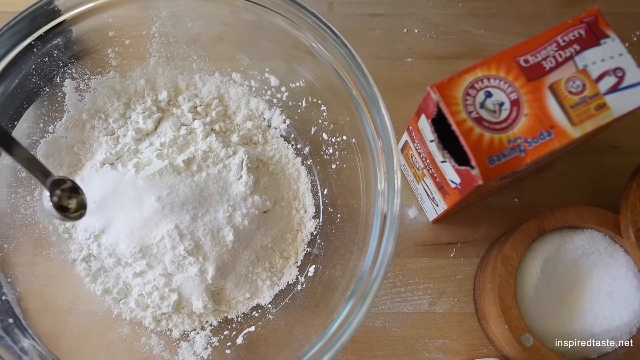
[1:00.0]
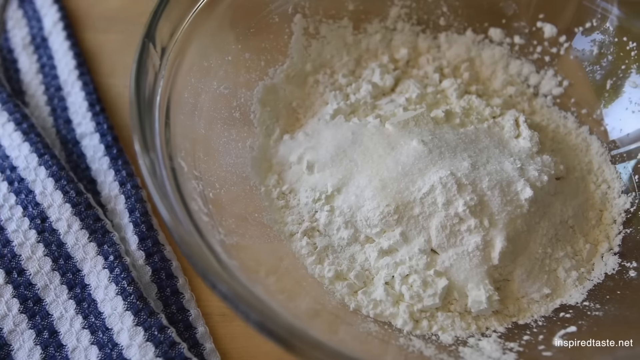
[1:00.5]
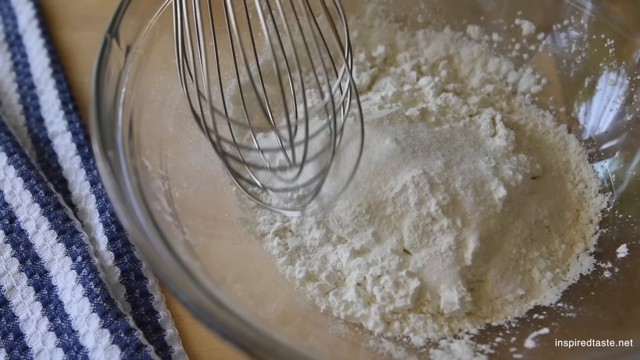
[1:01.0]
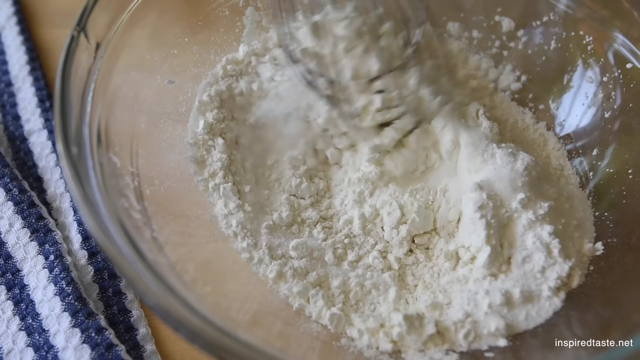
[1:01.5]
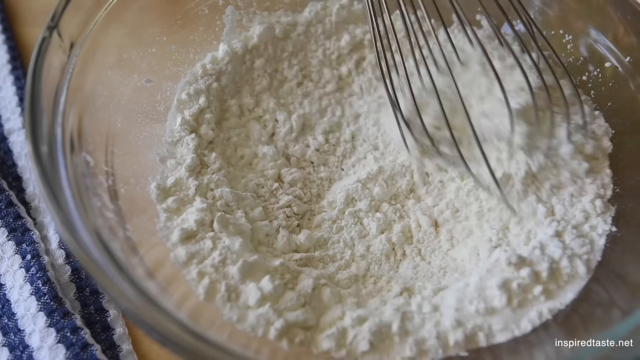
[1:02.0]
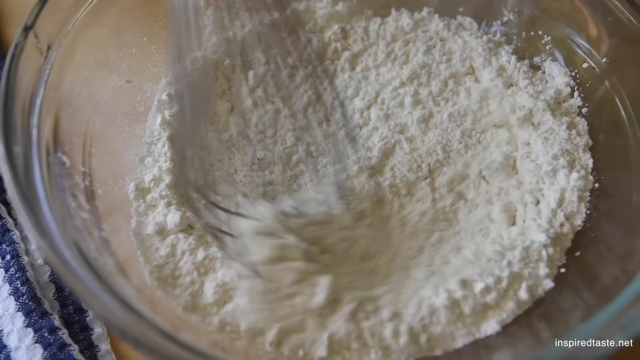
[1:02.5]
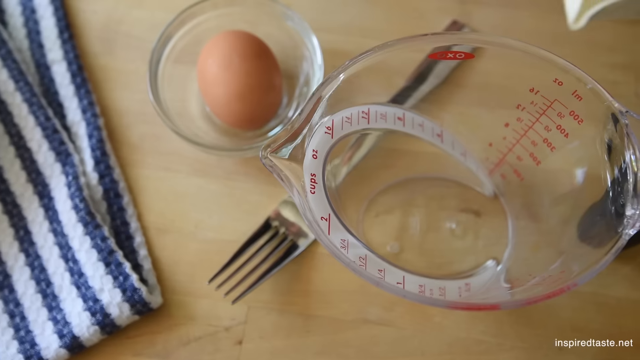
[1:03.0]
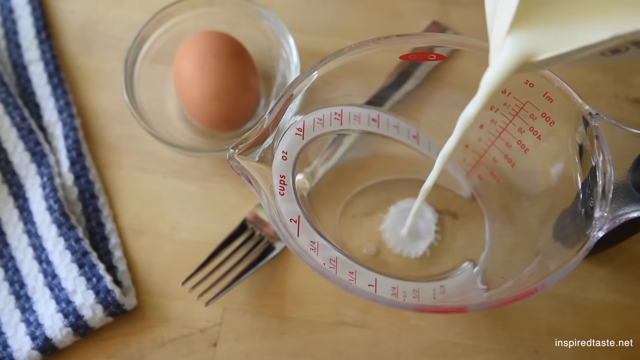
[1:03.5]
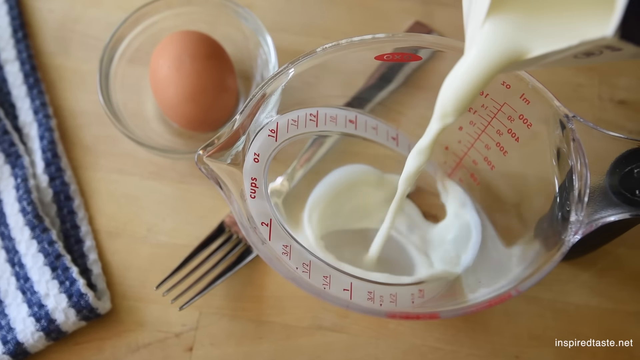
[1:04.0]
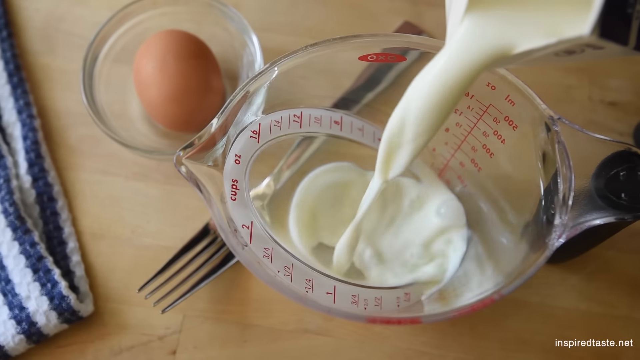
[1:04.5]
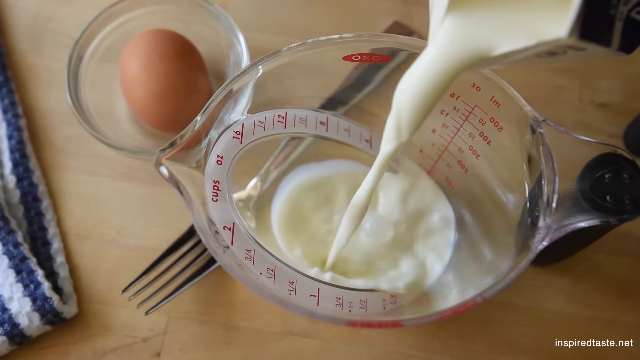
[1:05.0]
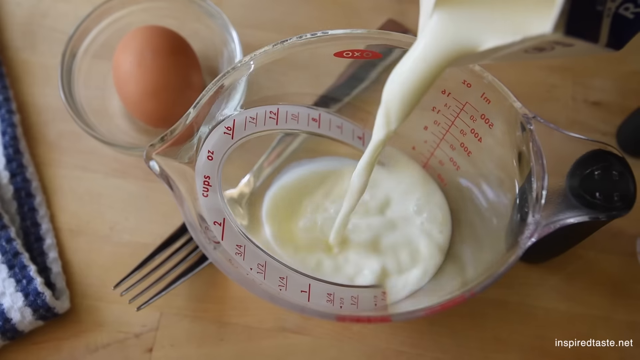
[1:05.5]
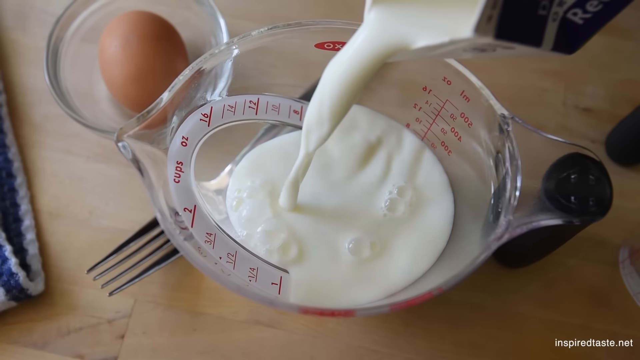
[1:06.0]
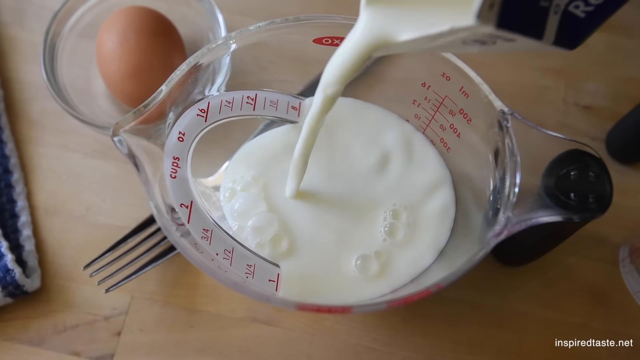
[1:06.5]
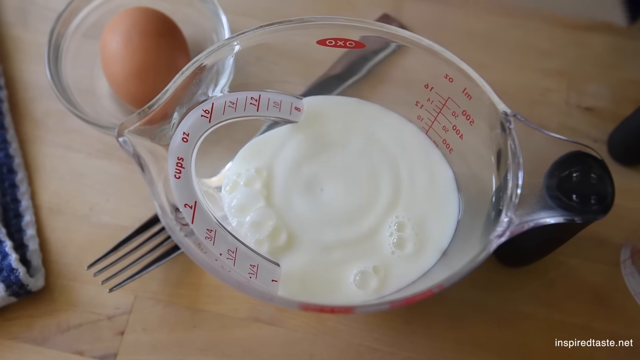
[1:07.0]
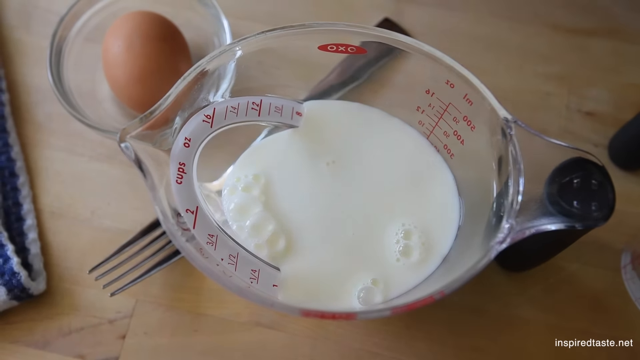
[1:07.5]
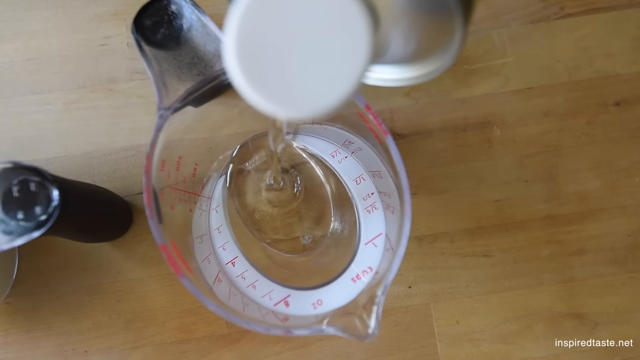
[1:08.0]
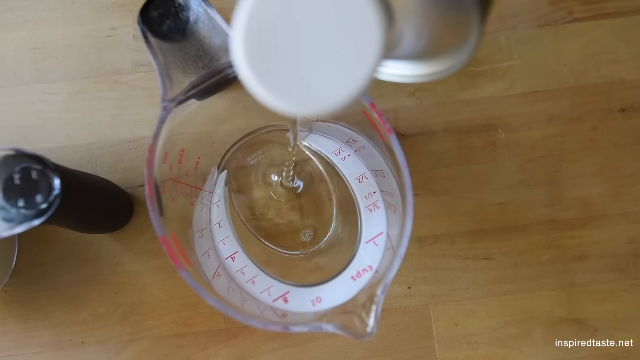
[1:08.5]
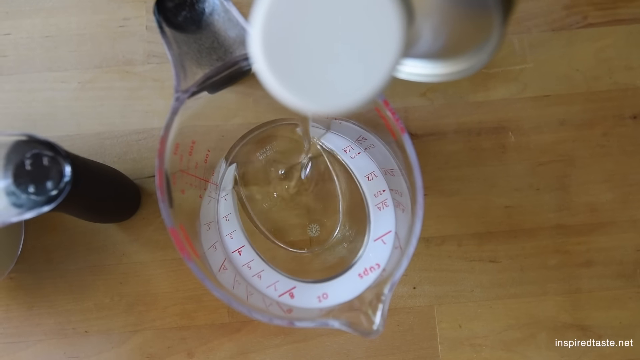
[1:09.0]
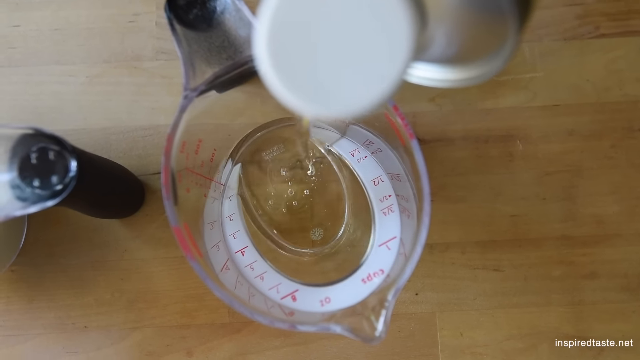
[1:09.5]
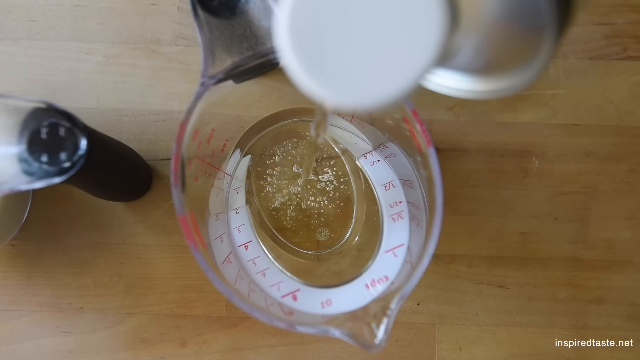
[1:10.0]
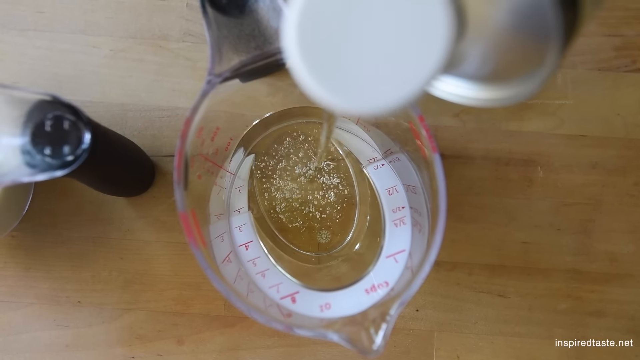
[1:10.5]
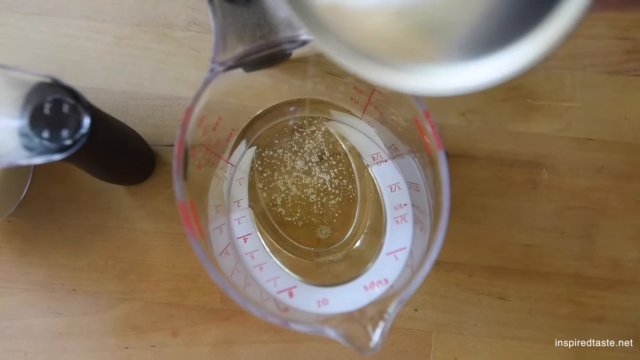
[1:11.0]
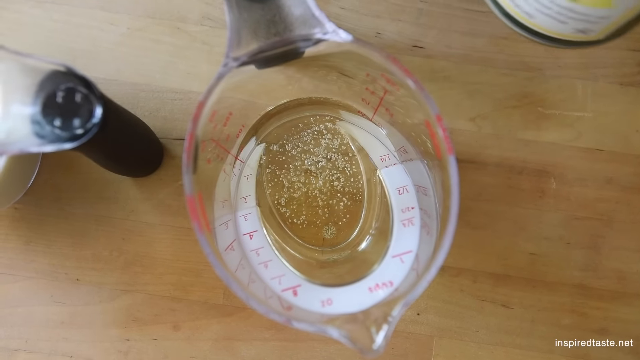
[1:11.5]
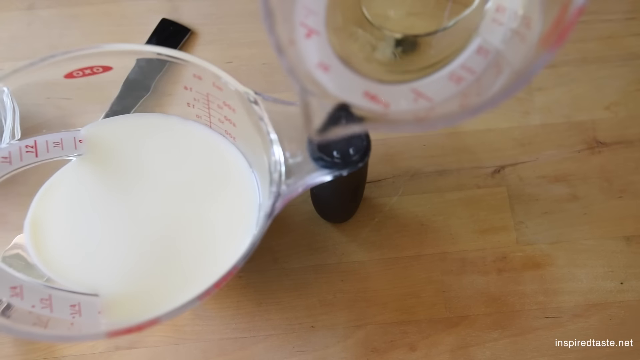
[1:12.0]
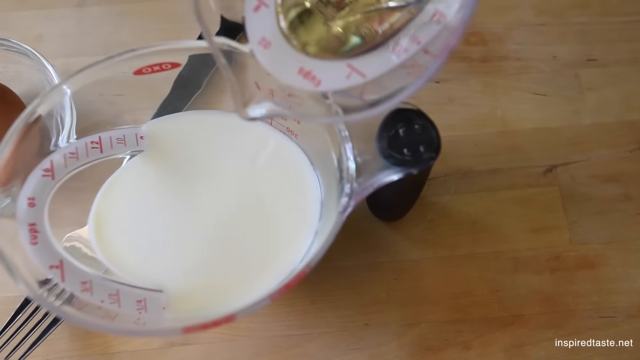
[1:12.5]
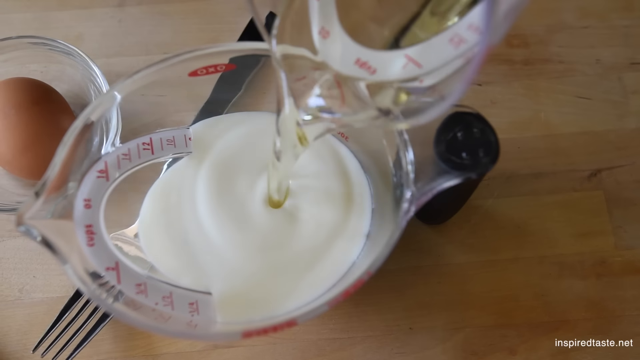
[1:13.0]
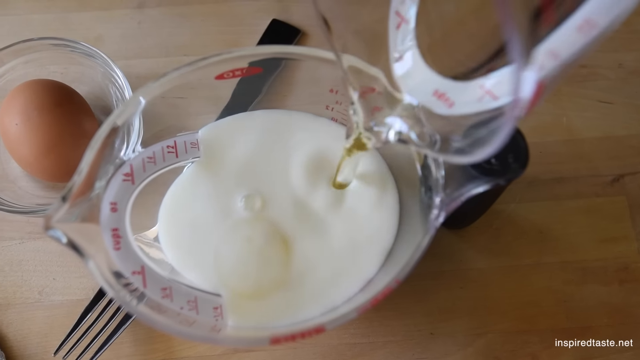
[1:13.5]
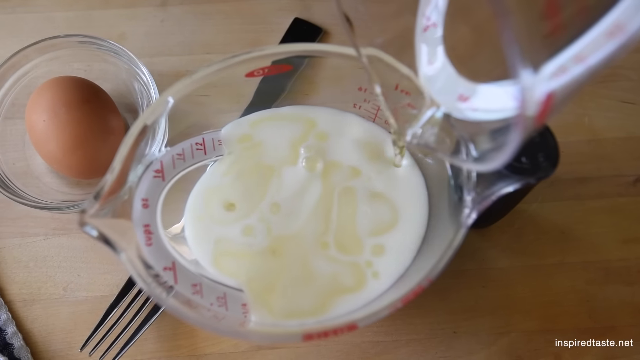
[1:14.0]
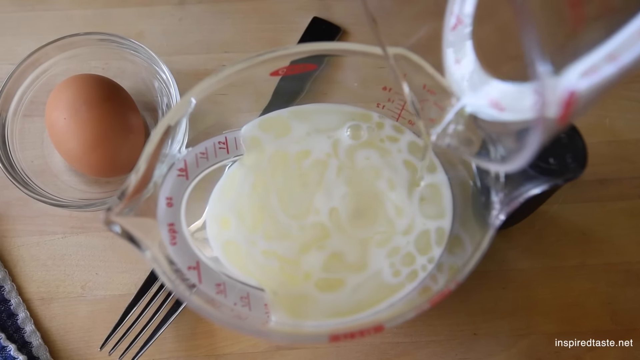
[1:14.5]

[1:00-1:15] The front screen shows the title "Easy Crispy Waffles recipe" and a still image of slices of waffles, looking like four piled on top of each other, with a pat of butter and some syrup on top and strawberries beside them, all on a white plate. After play is pressed, dry items are added into a clear bowl and a whisk is used to combine them. Then milk, eggs and oil are put together: a measuring cup is used to measure oil, which is poured into a larger measuring cup that has milk in it. An egg is sitting in a clear bowl, and a fork is beside one of the measuring cups. Everything is on a counter that looks kind of like fake wood or formica, with a blue and white striped dish towel to the side.